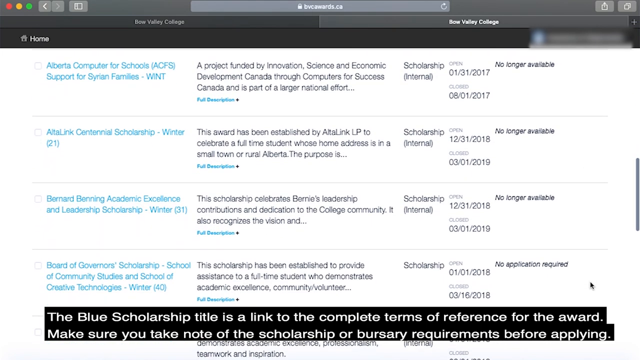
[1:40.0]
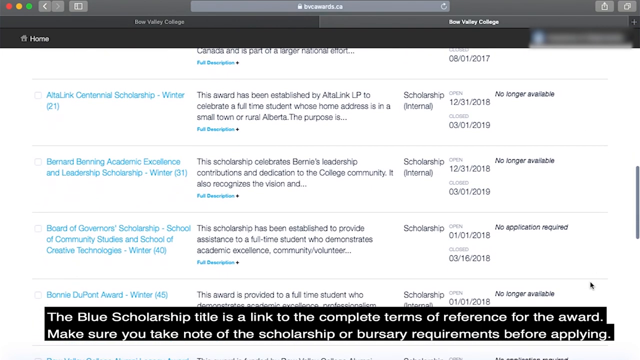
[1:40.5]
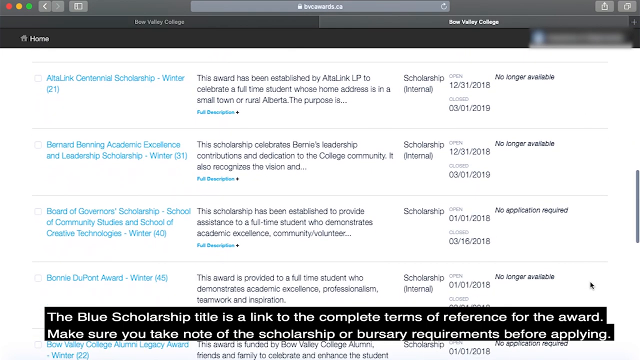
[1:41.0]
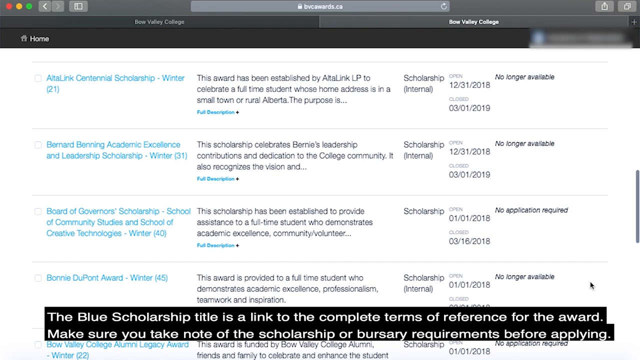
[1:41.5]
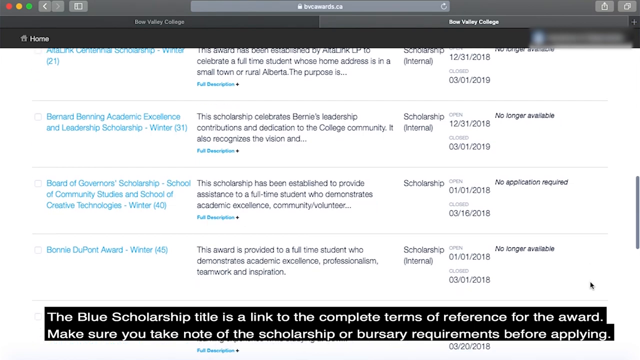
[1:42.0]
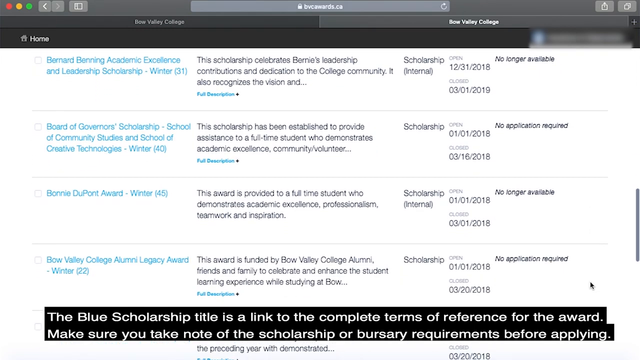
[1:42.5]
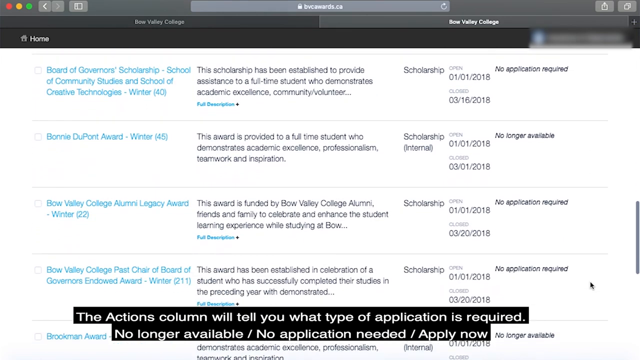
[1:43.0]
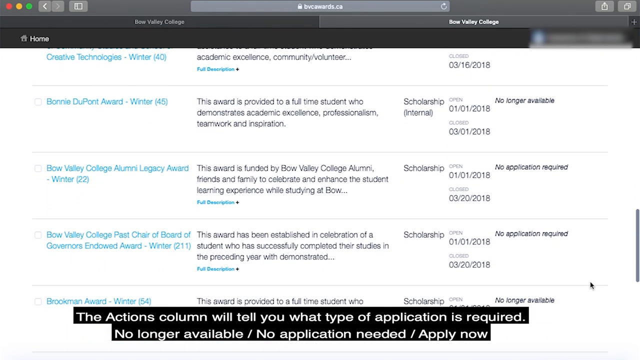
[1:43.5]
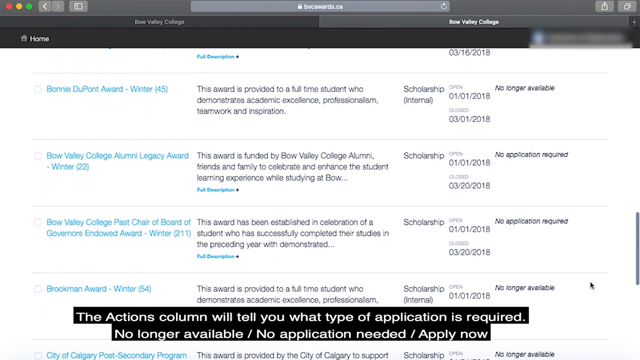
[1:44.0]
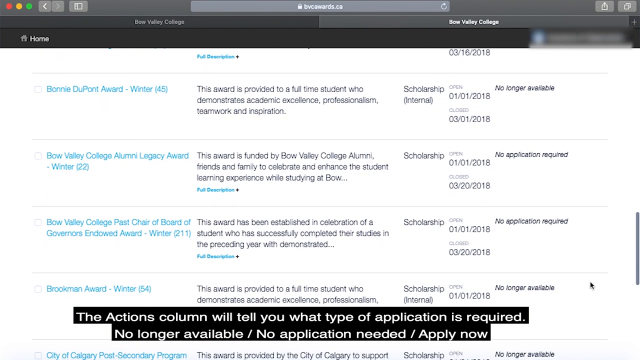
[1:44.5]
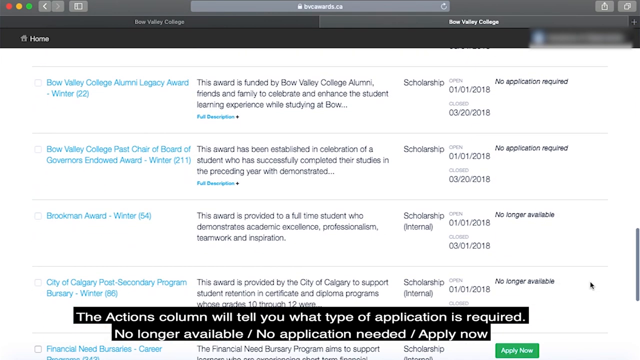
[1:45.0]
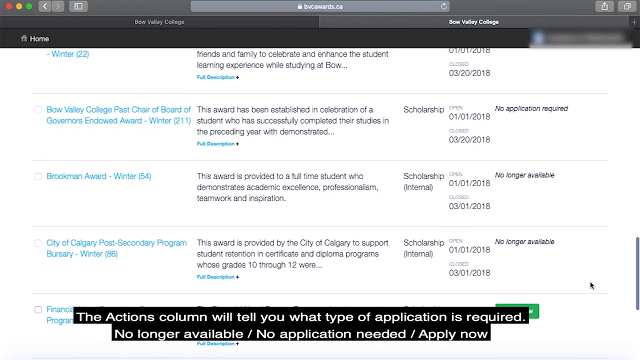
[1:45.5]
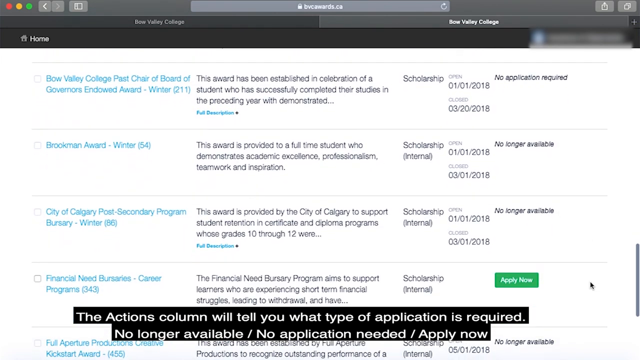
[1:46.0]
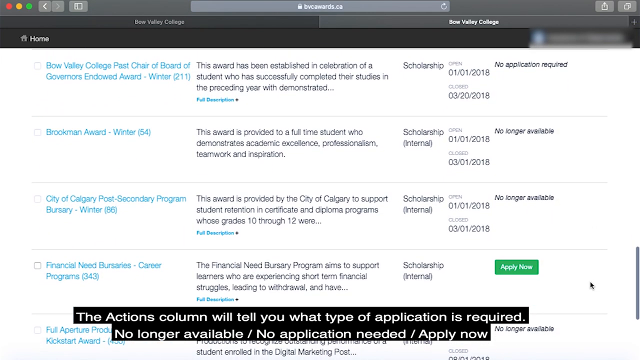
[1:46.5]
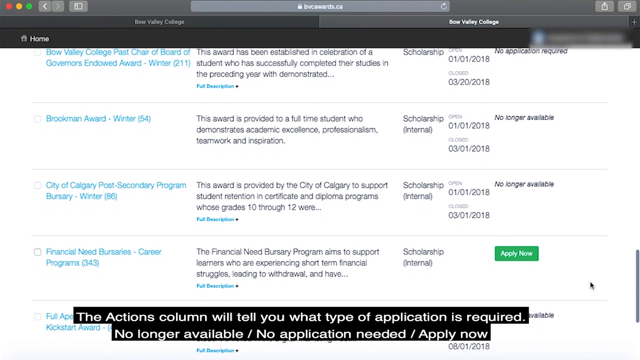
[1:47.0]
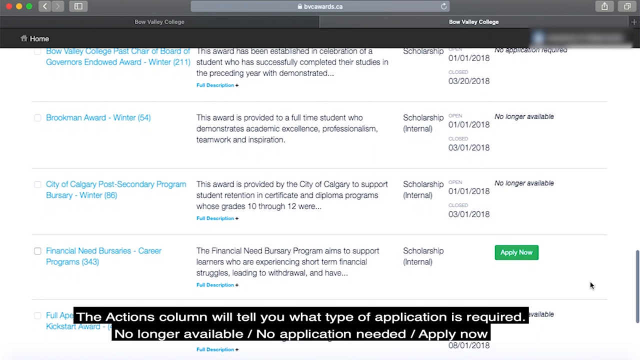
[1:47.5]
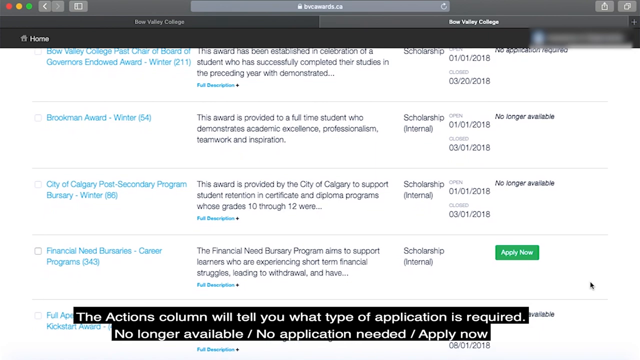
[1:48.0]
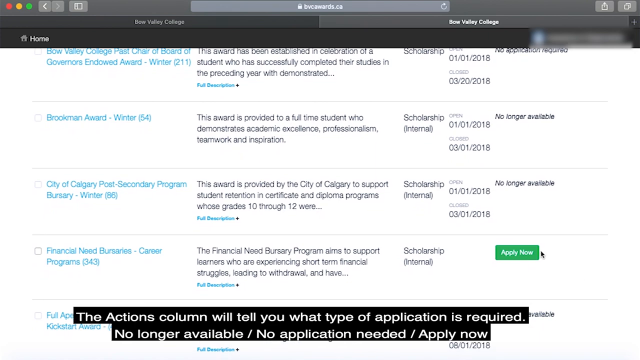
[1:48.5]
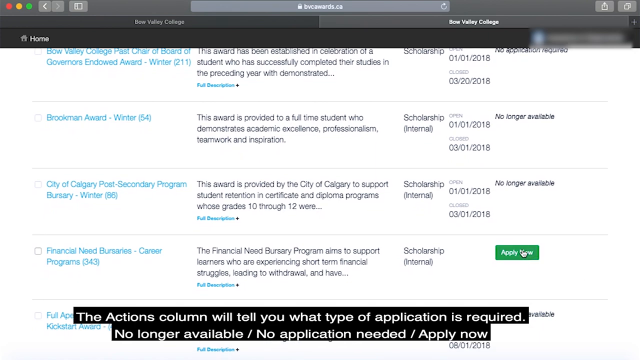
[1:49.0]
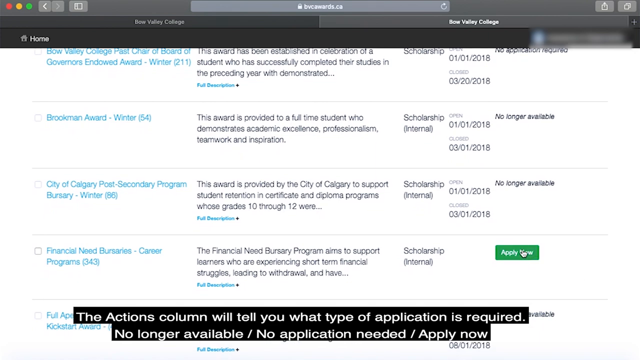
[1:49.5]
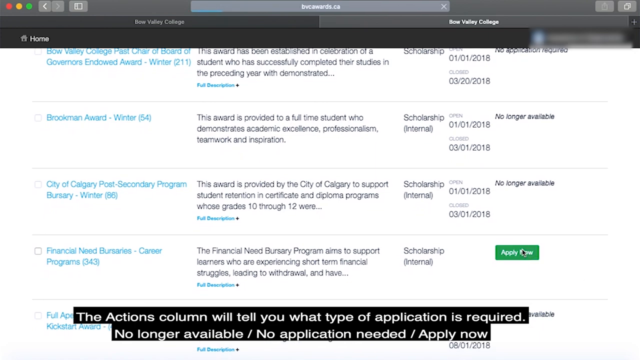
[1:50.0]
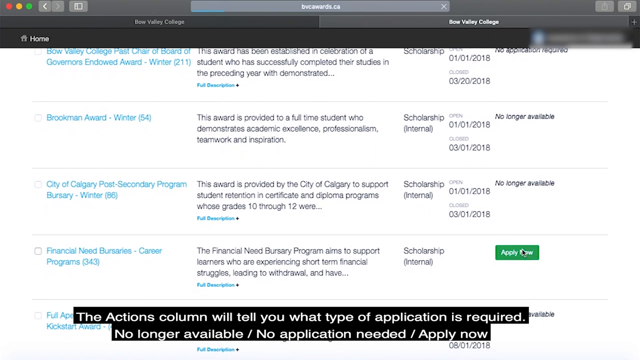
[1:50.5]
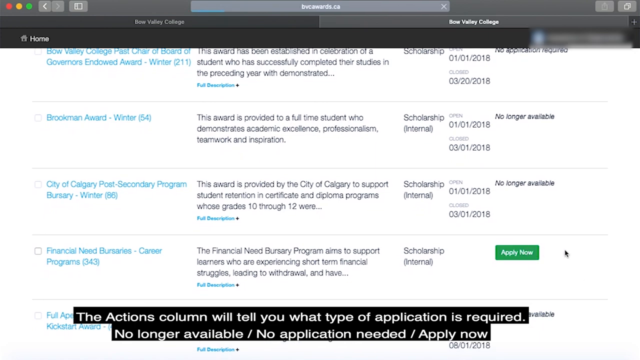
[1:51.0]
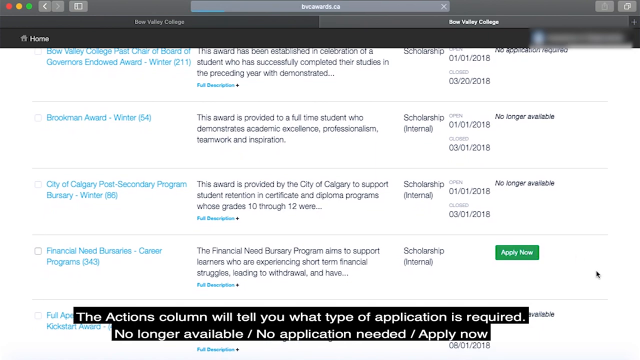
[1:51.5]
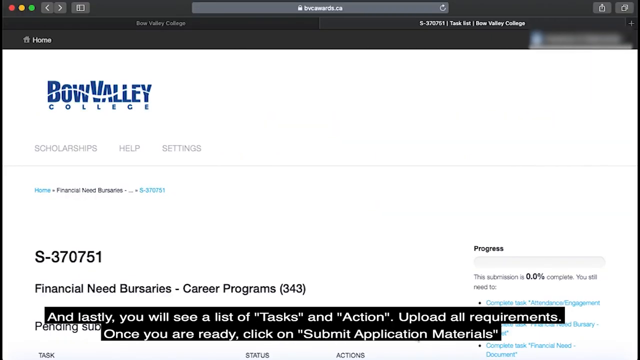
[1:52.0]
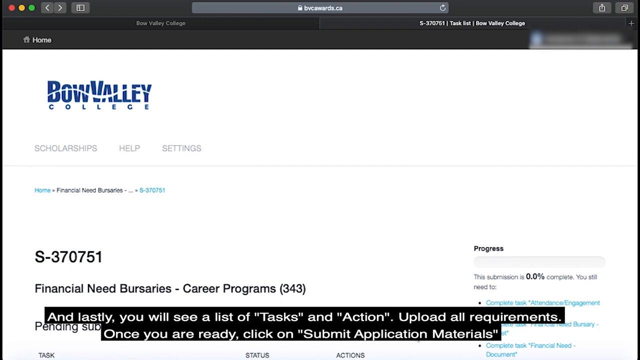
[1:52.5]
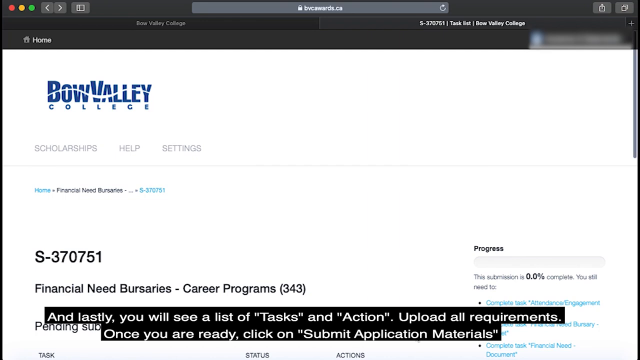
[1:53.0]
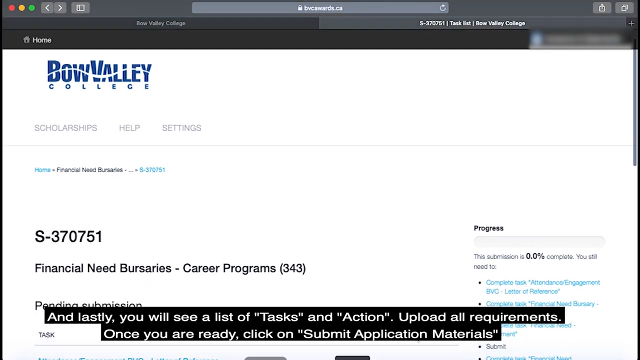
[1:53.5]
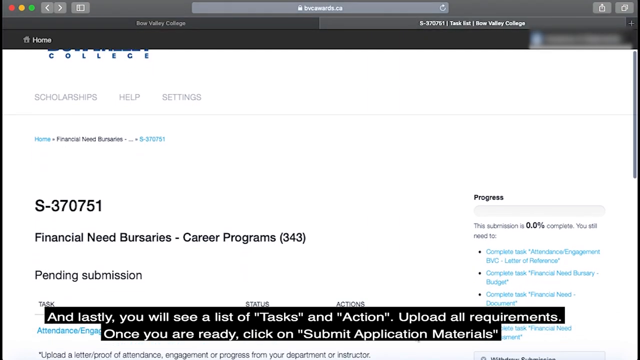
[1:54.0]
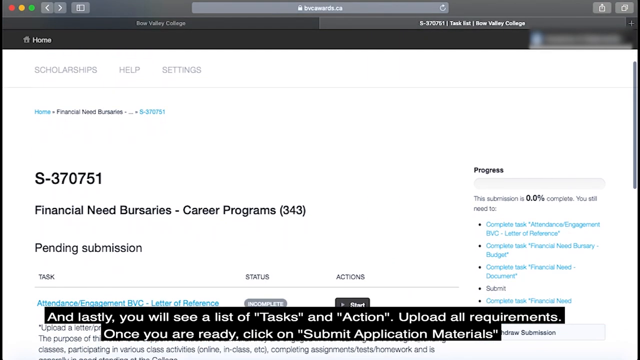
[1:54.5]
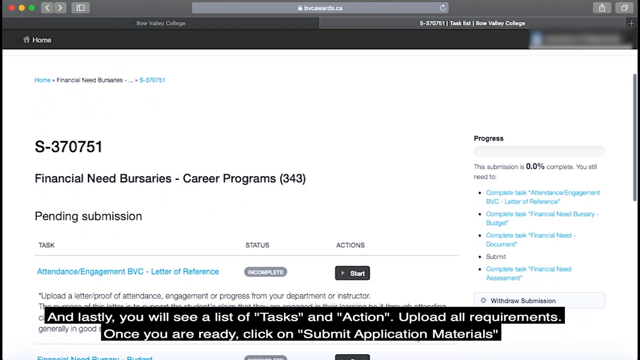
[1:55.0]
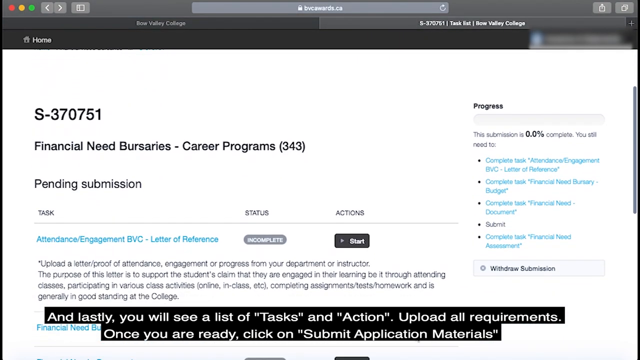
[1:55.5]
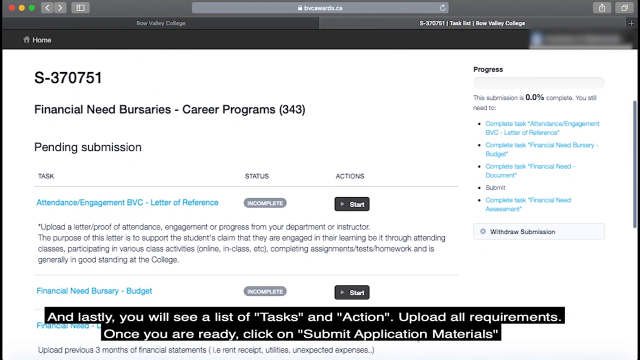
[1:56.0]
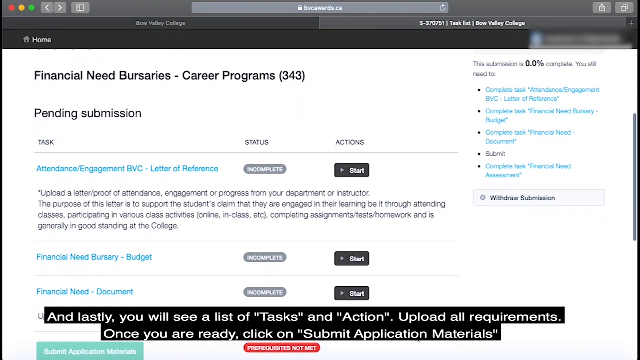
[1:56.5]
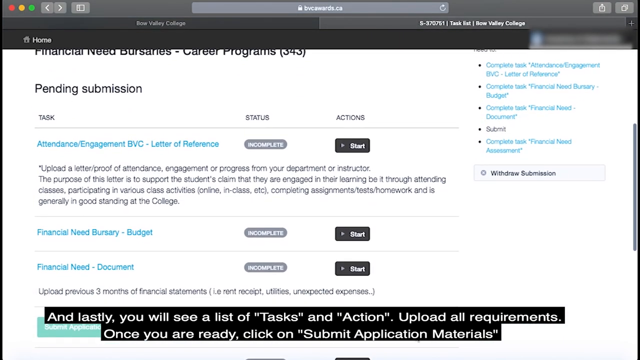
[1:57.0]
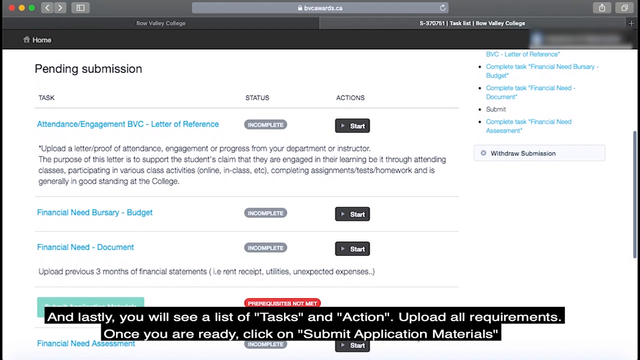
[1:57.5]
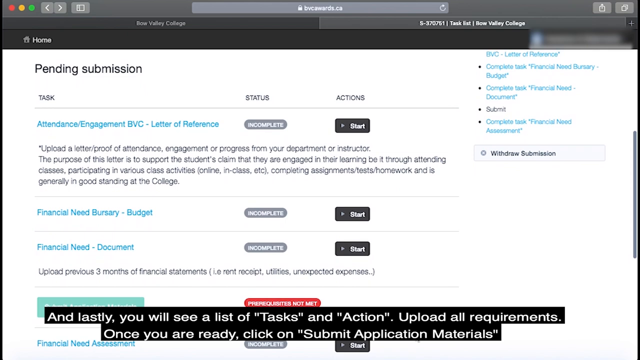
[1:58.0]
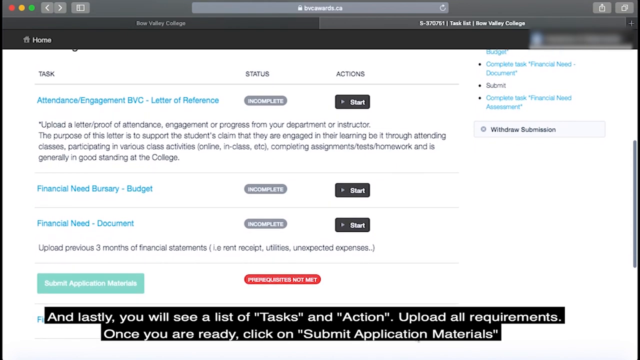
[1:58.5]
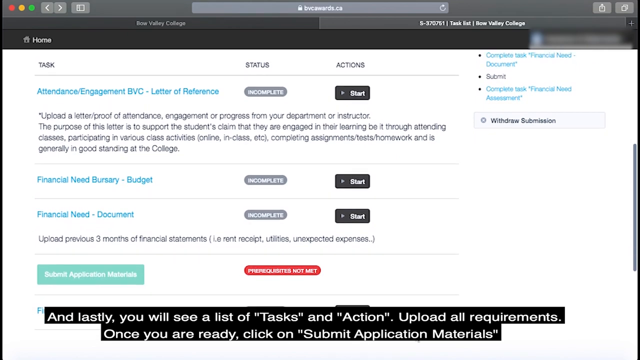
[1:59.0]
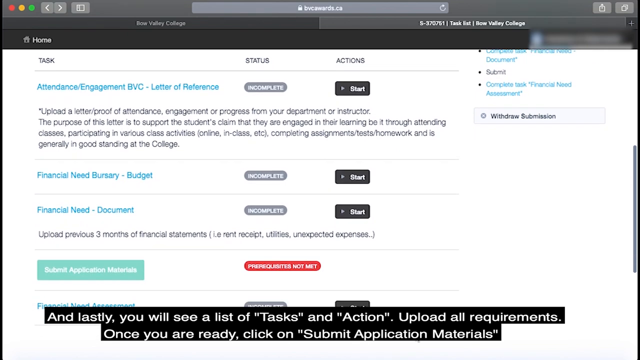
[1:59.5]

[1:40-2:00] A page with lots of text on it is scrolled down using the right-hand side bar, nearly all the way to the very bottom. In the bottom right-hand corner is a rectangular box with a green background and white writing that says "apply now". She hovers the mouse over the green tab and clicks it with her finger. The page changes to a different screen, which scrolls down using the right-hand side bar again, showing the wording "Financial Need Bursaries Career Programmes 343" on the left-hand side of the page. The screen continues to scroll all the way down to the bottom, where black writing in the upper left-hand side of the screen says "Pending Submission", and below that it says "Task, Status and Actions".